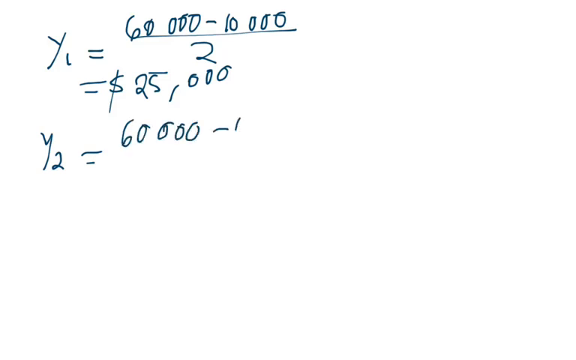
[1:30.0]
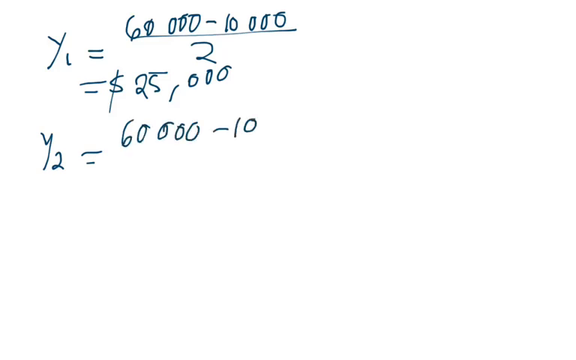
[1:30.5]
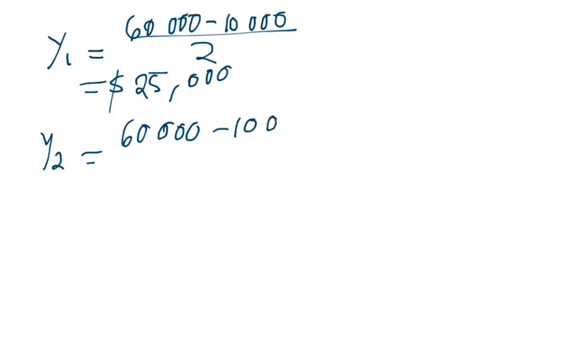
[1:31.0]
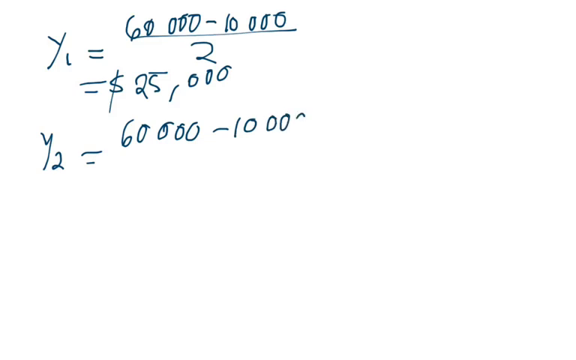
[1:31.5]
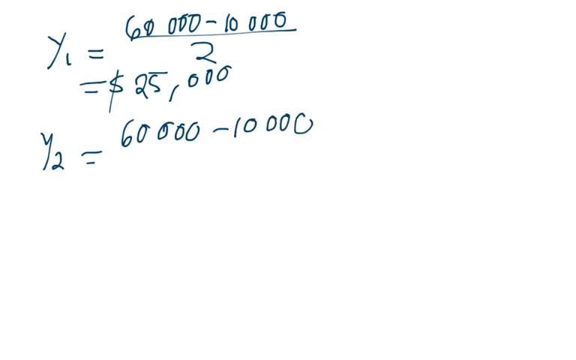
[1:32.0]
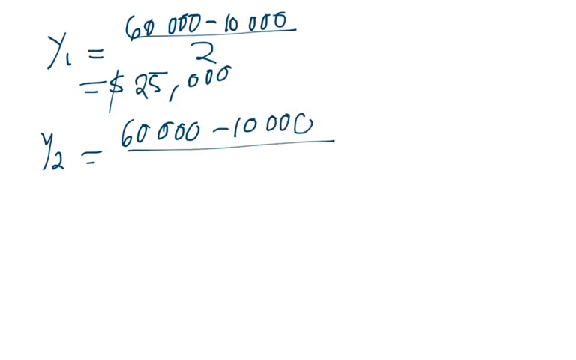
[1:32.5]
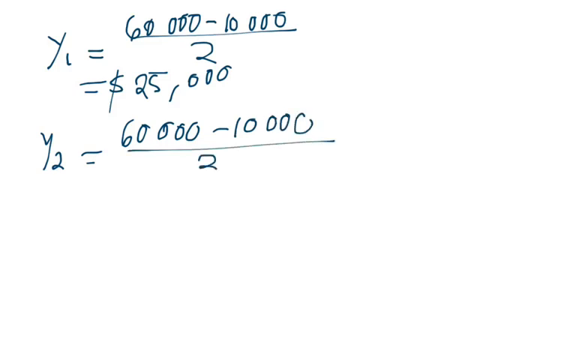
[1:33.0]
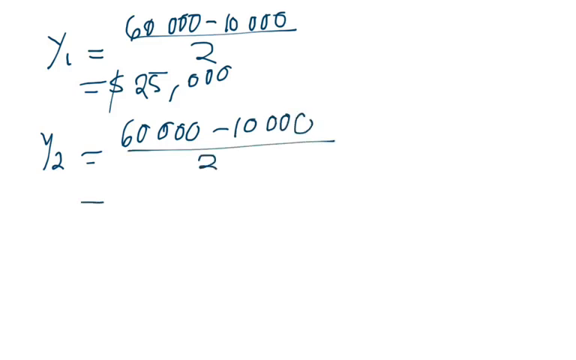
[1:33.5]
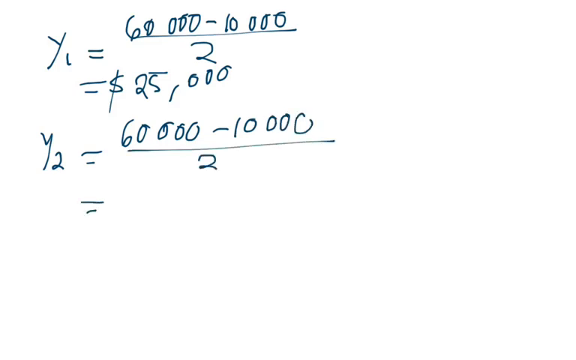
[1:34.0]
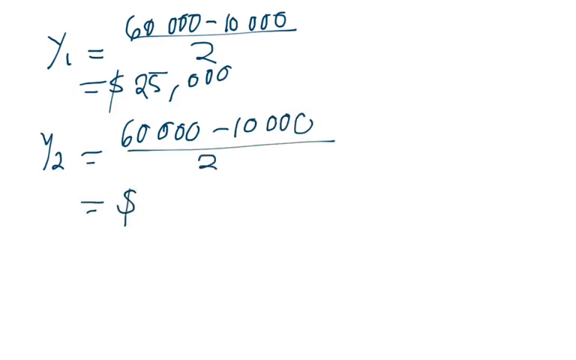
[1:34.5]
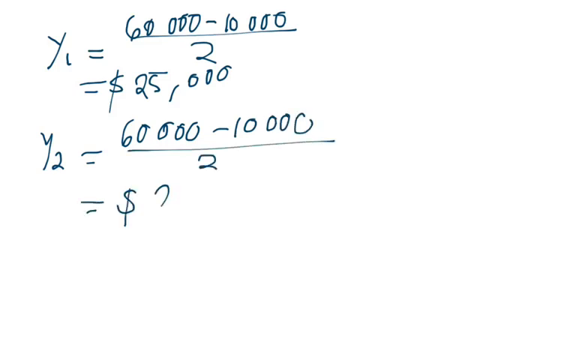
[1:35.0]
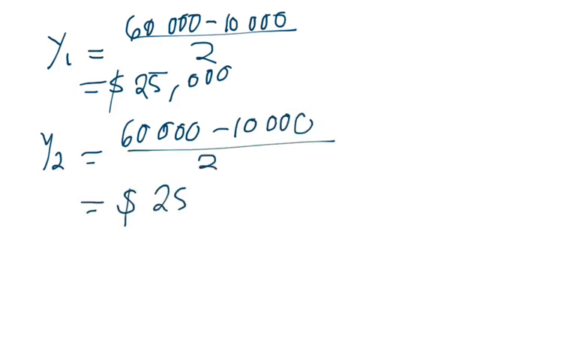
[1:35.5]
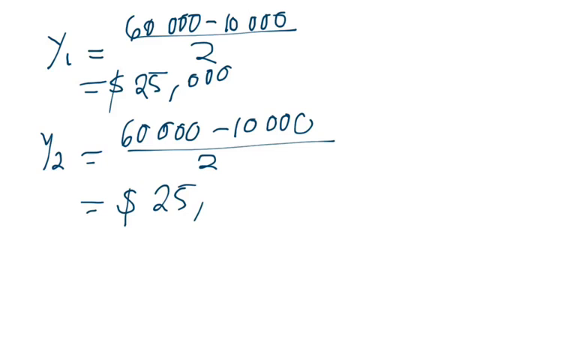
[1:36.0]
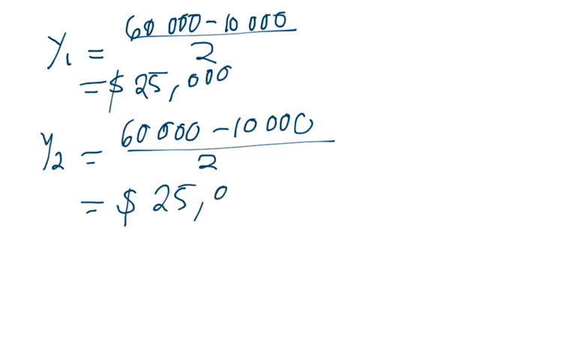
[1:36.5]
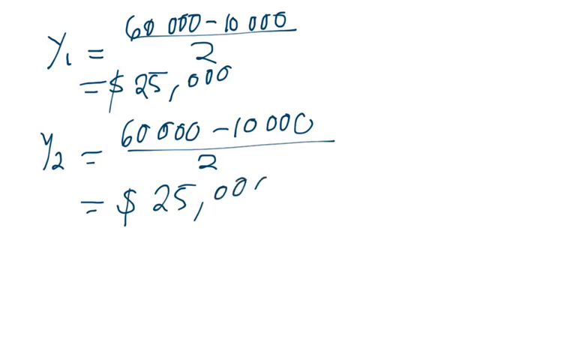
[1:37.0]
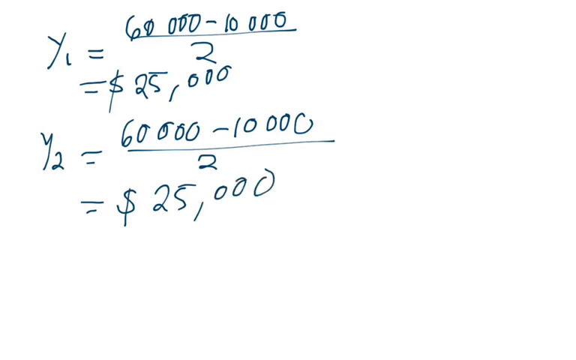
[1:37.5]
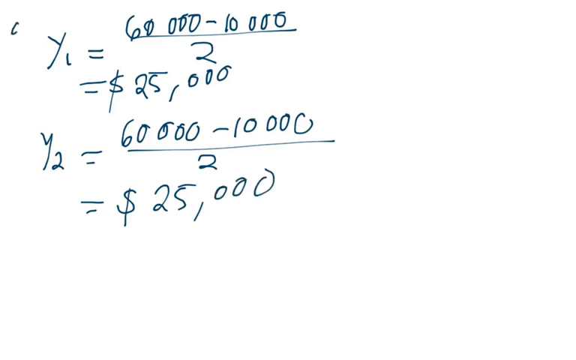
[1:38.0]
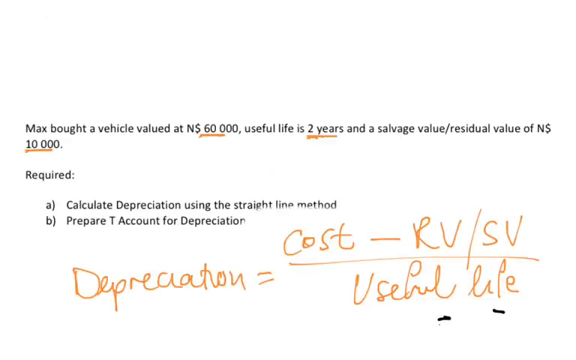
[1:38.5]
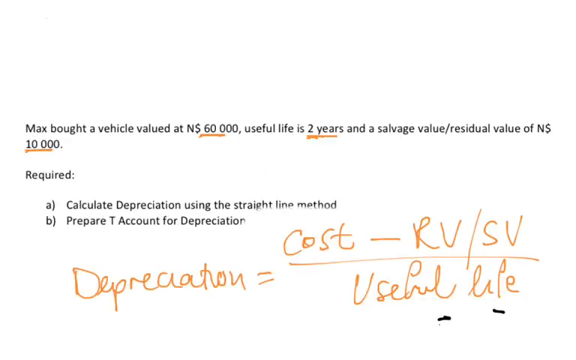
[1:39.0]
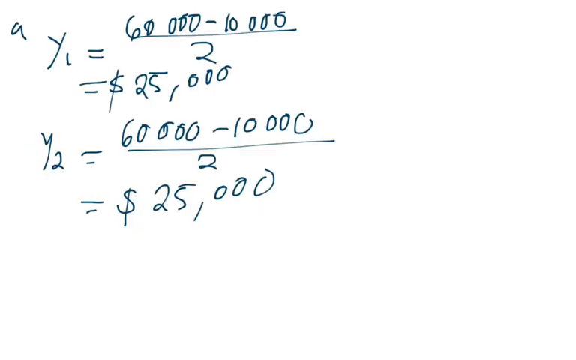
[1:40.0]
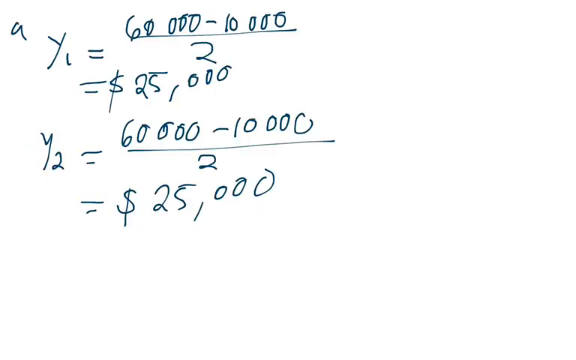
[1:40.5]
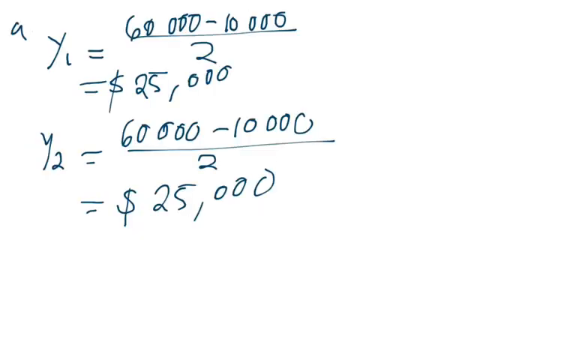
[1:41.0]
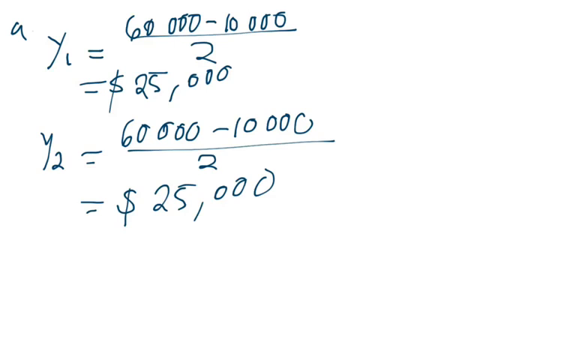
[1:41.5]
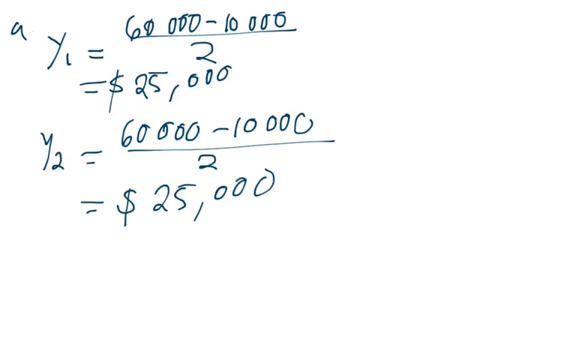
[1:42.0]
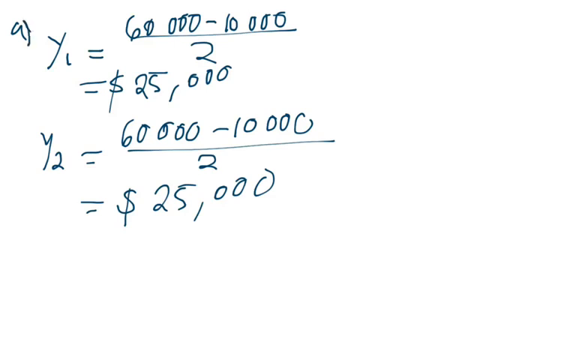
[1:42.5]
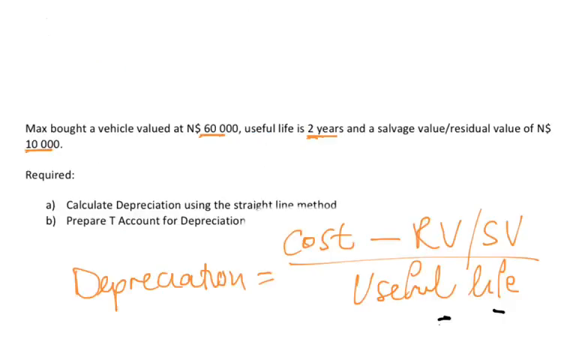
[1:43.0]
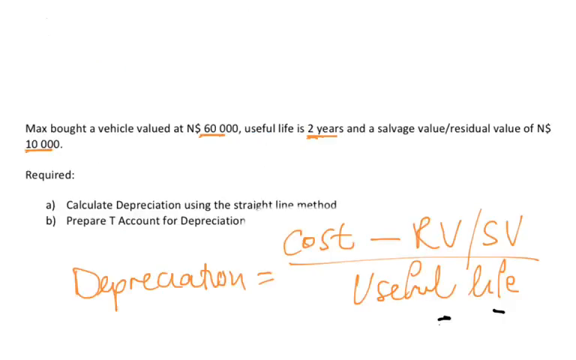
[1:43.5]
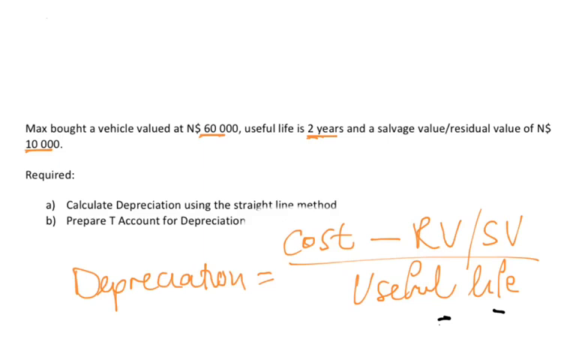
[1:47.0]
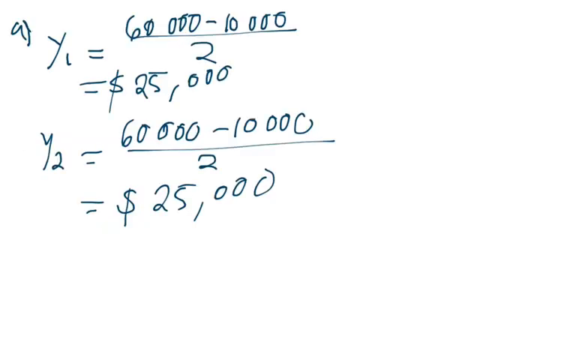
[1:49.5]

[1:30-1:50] A white background has a calculation written on top of it: "Y1 = $60,000 - $10,000 over 2", below that "= $25,000", below that "Y2 = $60,000 - $10,000 over 2", and below that "= $25,000". An A is written in the top left corner of the slide. The screen then transitions to the slide with the word problem, which says "Max bought a vehicle valued at $60,000, useful life is 2 years and a salvage value/residual value of N$10,000." Below that it says "required:", then "A) calculate depreciation using the straight line method", with some of "straight line method" erased. Below that it says "B) prepare T account for depreciation", with the n at the end of depreciation slightly faded. Below that is a hastily written calculation: "depreciation = cost - Rb/Sb over useful sale", and below that are two random lines.